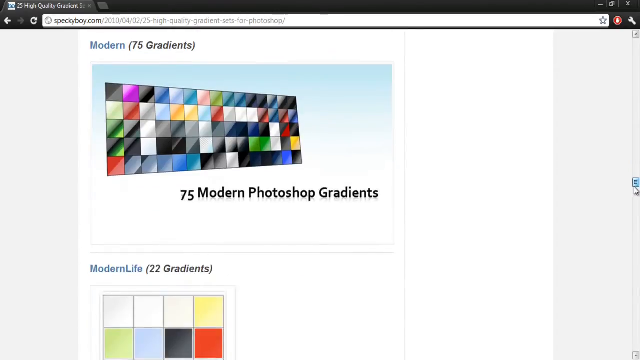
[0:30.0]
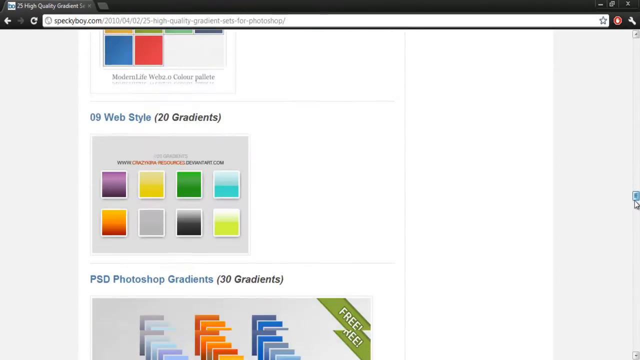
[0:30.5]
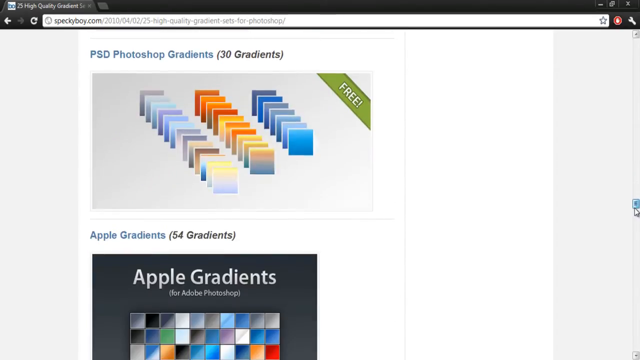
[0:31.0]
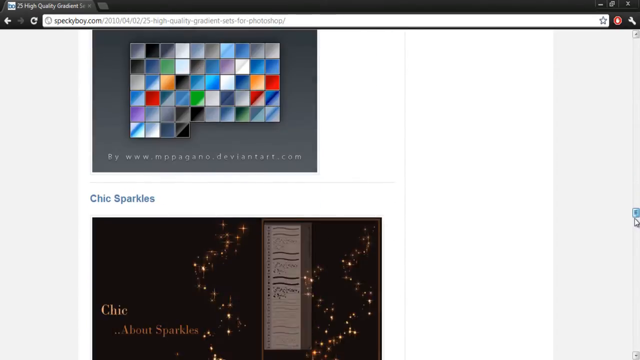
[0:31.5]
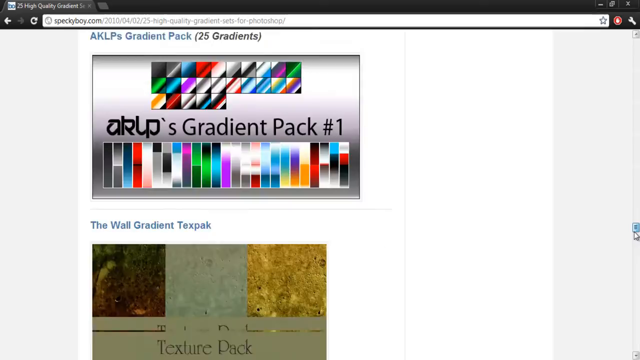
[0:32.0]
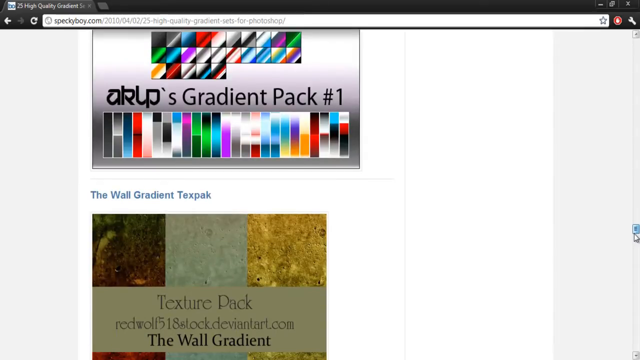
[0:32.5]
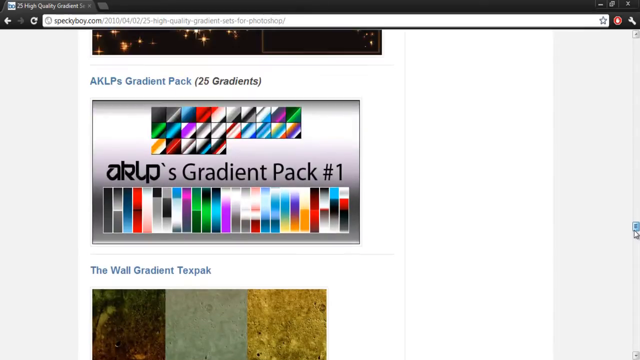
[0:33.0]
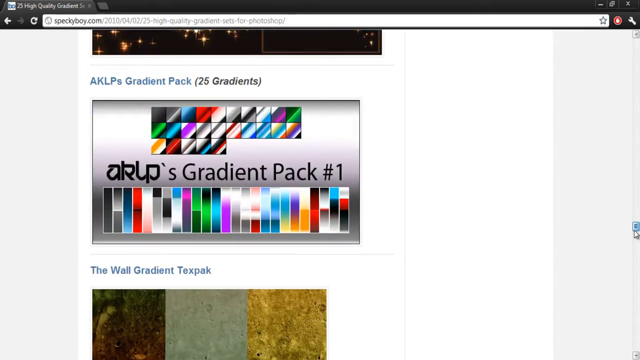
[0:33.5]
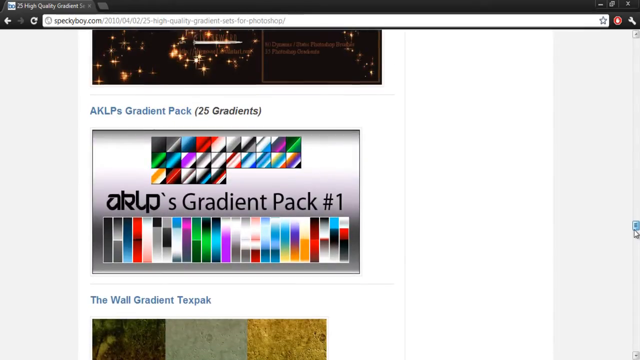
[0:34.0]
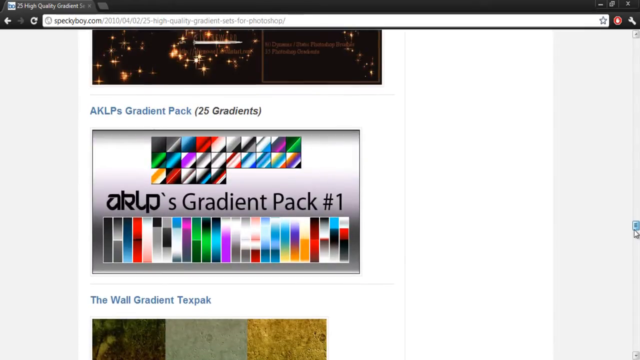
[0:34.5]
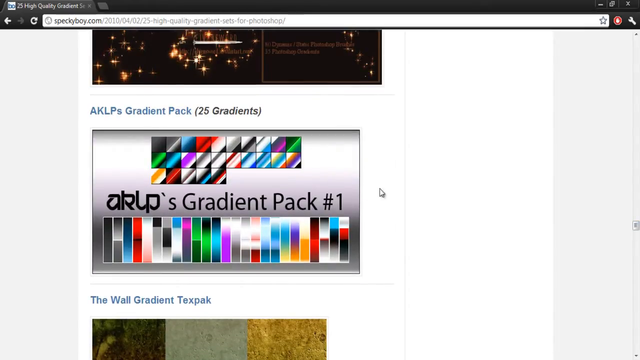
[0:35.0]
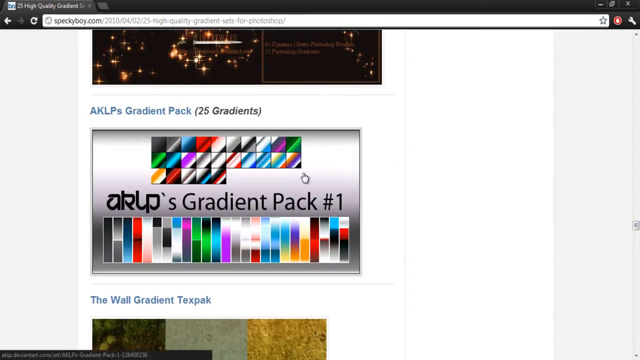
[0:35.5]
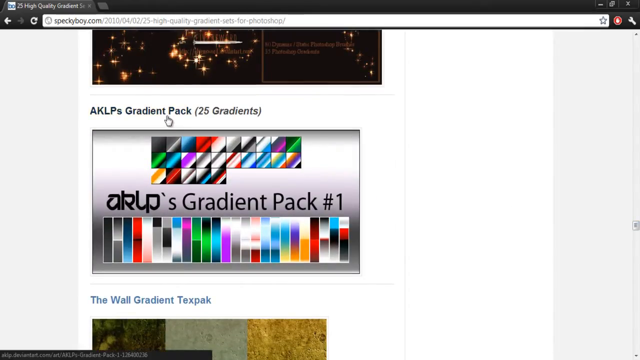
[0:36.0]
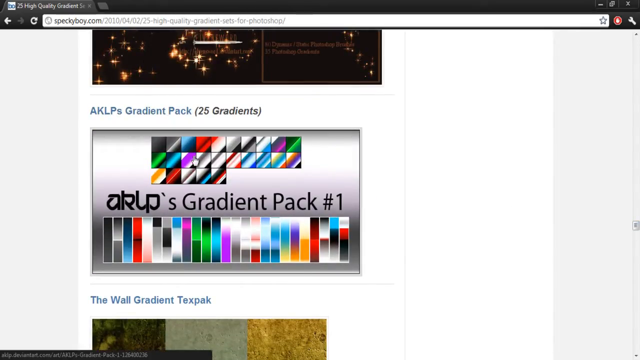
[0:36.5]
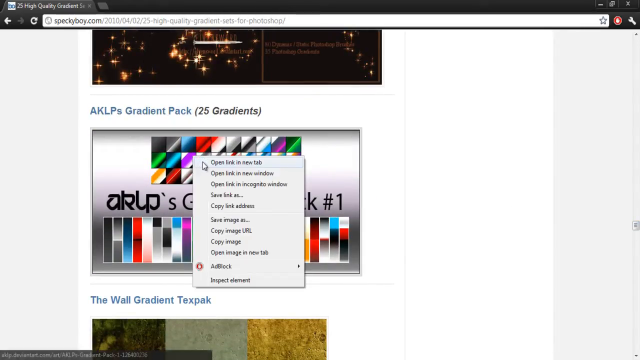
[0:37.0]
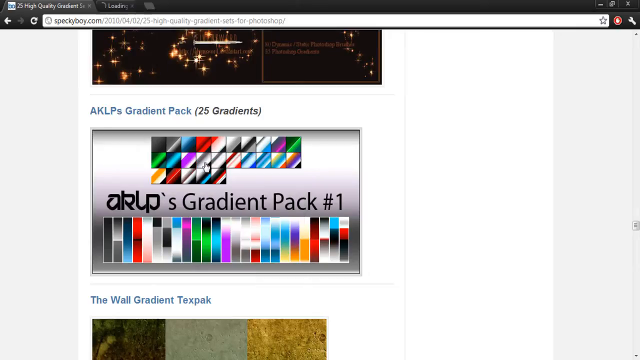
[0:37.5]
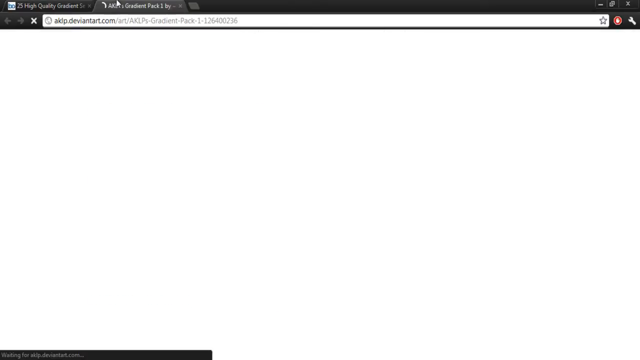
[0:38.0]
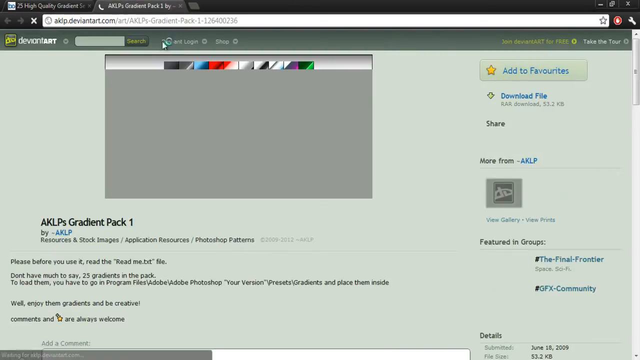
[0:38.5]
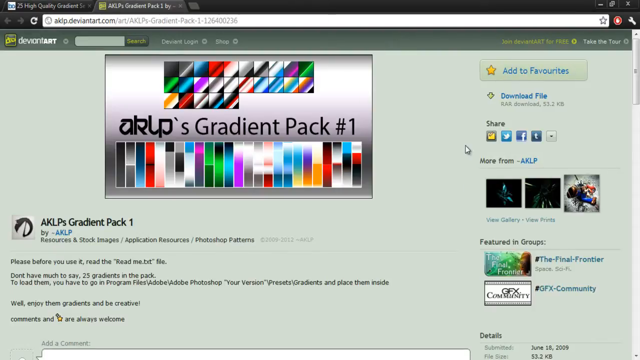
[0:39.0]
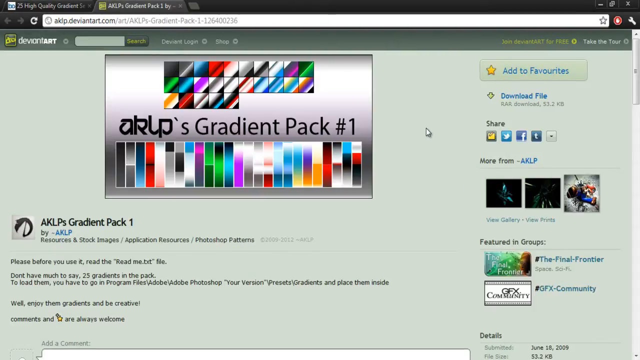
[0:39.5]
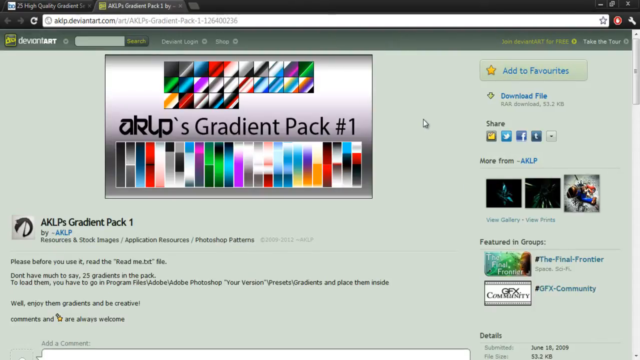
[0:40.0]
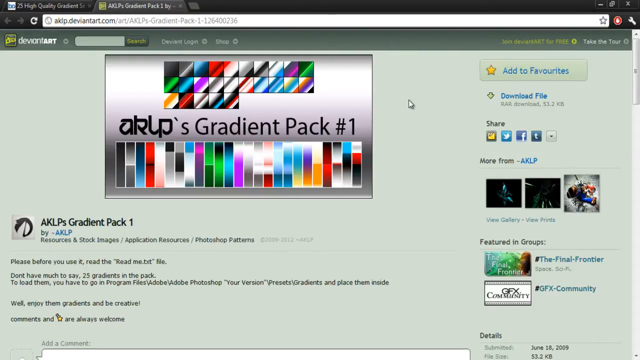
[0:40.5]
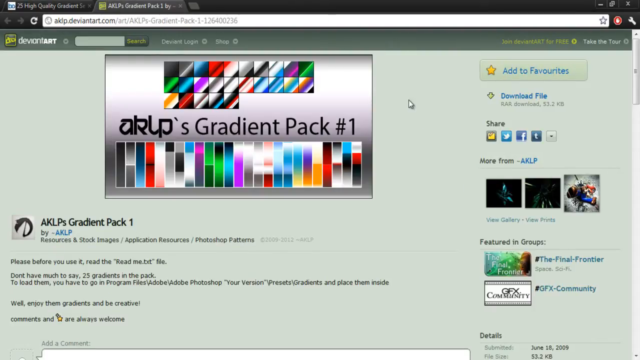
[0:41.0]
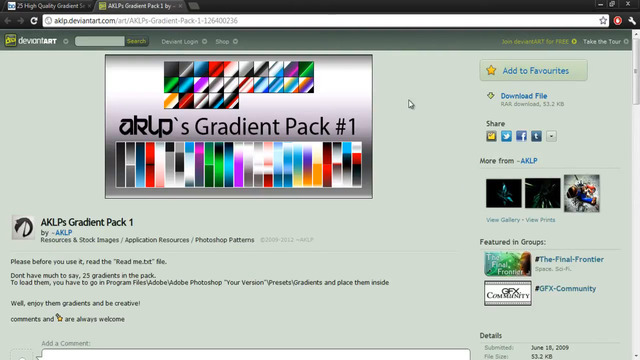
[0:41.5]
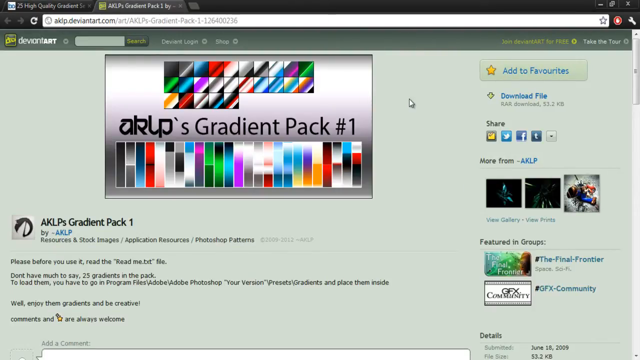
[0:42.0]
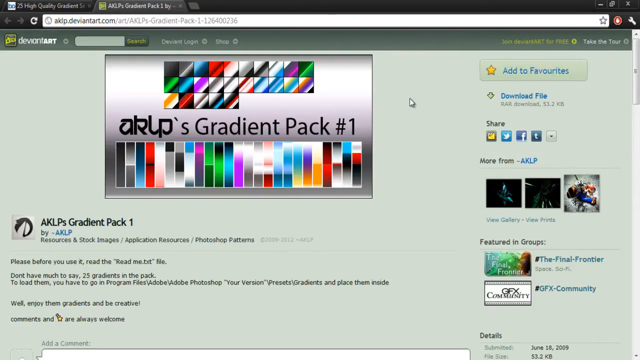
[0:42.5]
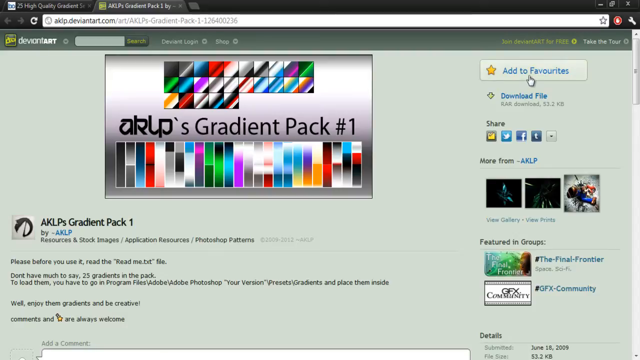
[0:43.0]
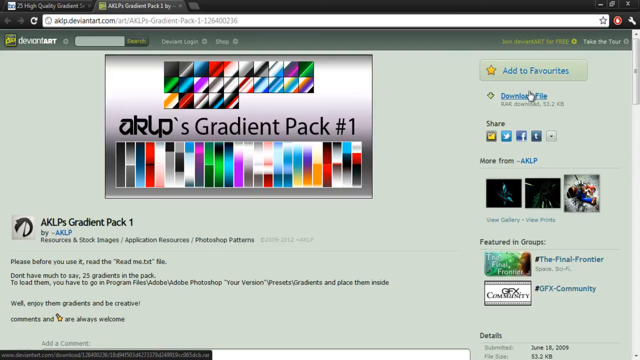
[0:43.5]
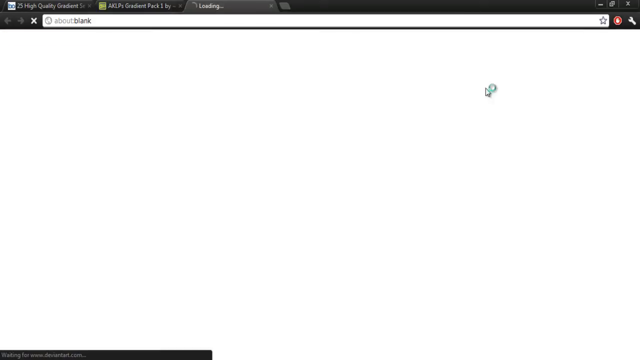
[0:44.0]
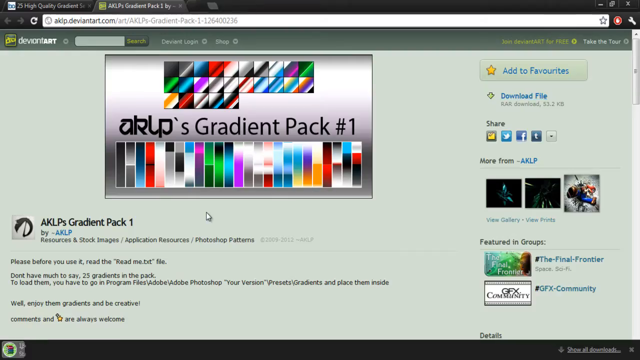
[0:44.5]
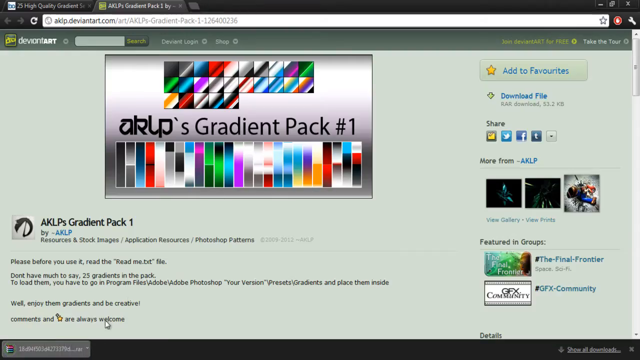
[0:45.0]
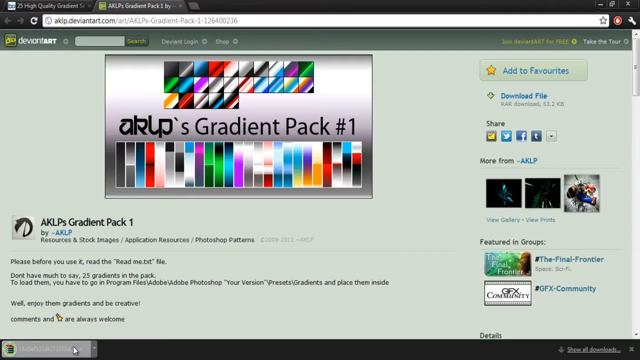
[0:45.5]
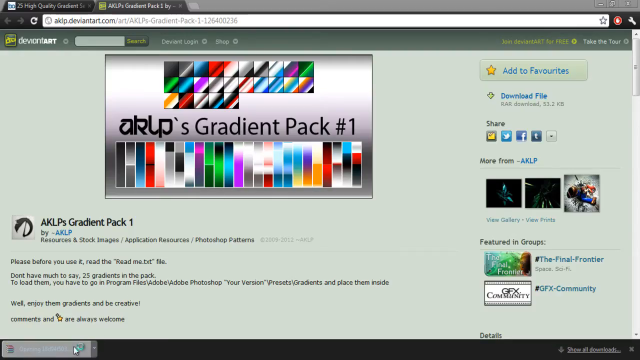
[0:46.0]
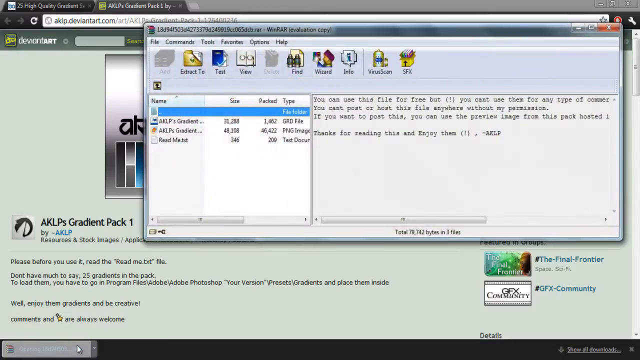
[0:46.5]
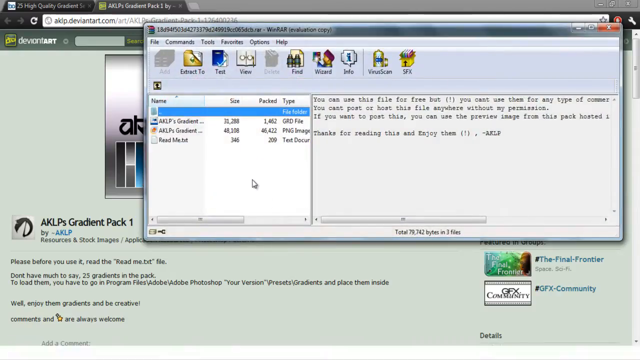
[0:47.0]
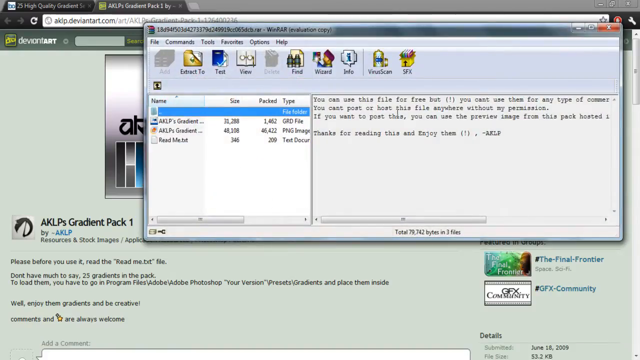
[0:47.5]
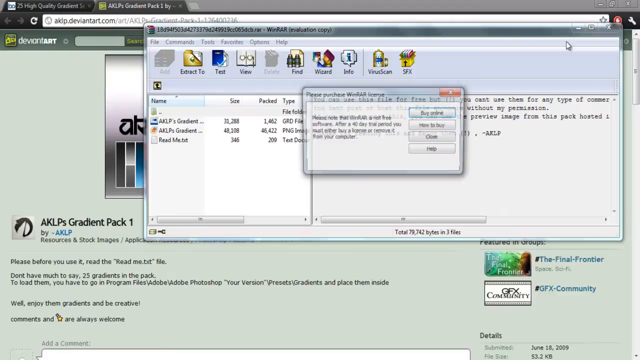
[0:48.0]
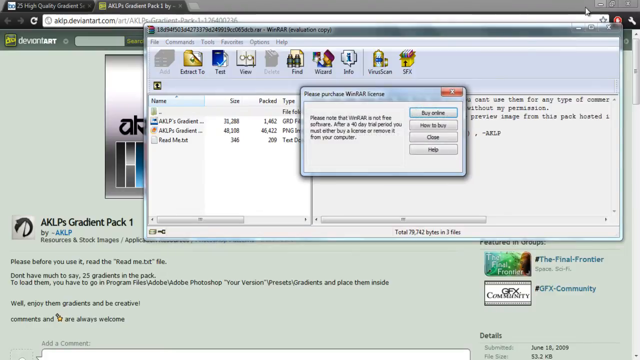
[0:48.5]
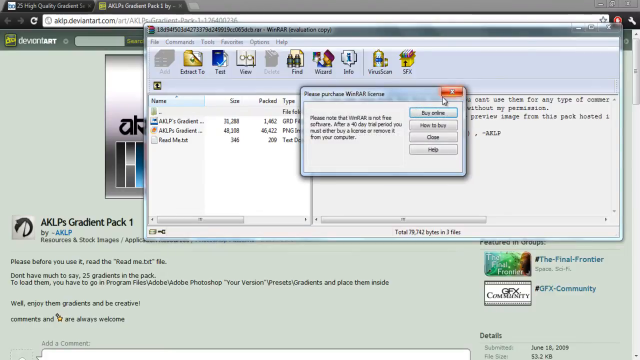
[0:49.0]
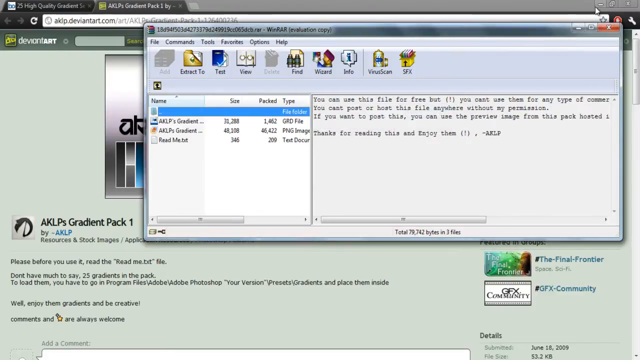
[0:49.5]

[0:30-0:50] A grid of colors appears on the same web page, speckyboy.com. The grid is titled "Modern, 75 Gradients", and at the bottom of this grid of different shades of colors it says "75 Photoshop Gradients". The page is then scrolled down to show different shades of gradients used in Photoshop. The cursor stops at one called aklp-gradients-packed-25-gradients, and this web address is opened in a new tab, where the page is solely dedicated to the AKLP gradients pack 1. The mouse clicks on the top right corner of the page, where there is an "Add to Favorites" button, to add this set of gradients. The package of different color gradients is then saved onto the computer, added to its own folder, and the mouse clicks to cancel the new windows for saving the file.